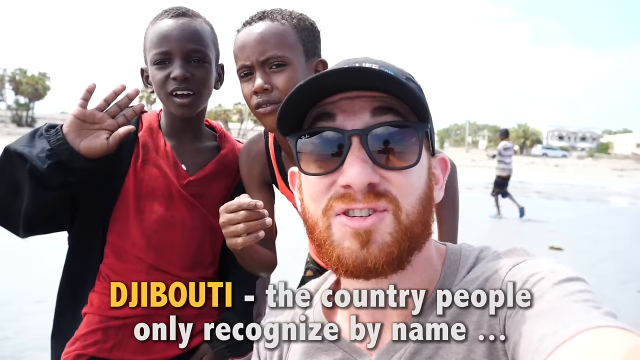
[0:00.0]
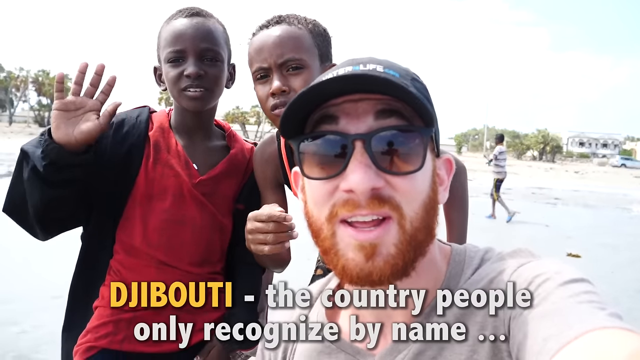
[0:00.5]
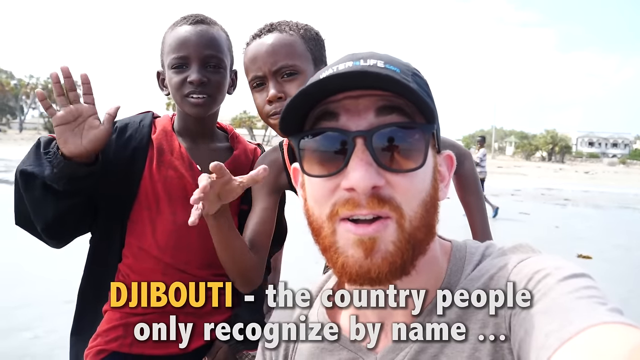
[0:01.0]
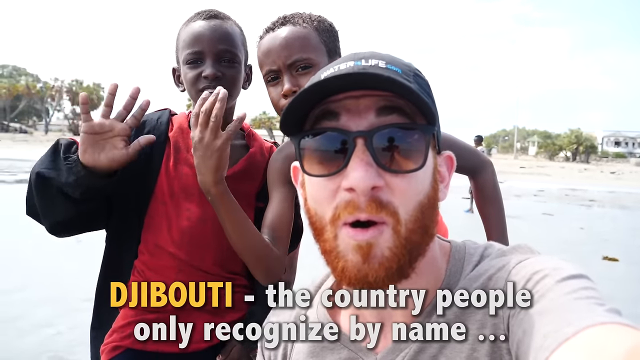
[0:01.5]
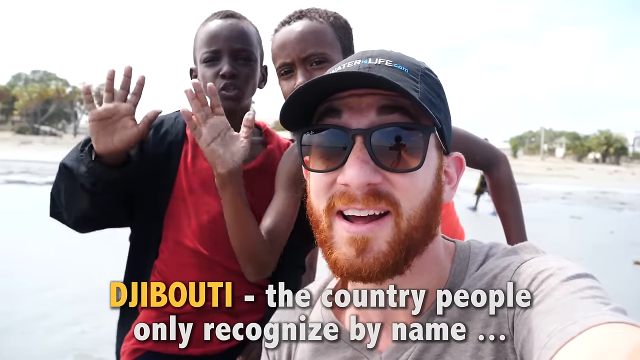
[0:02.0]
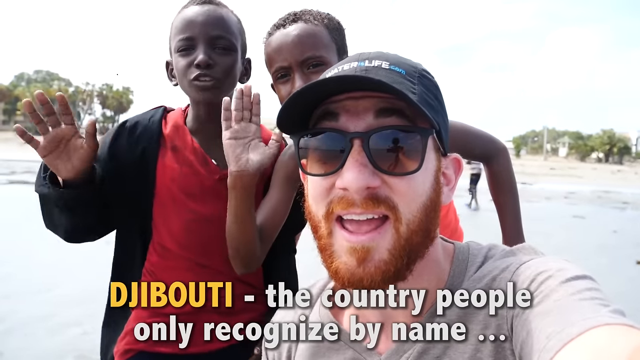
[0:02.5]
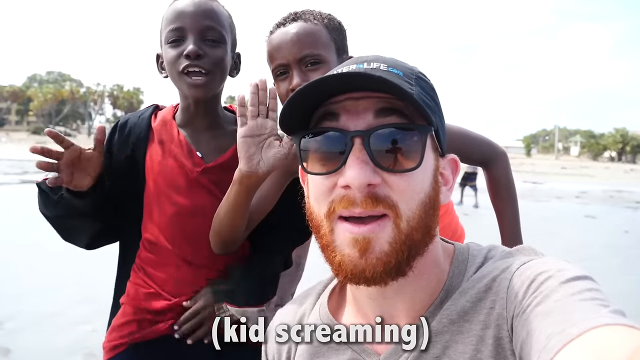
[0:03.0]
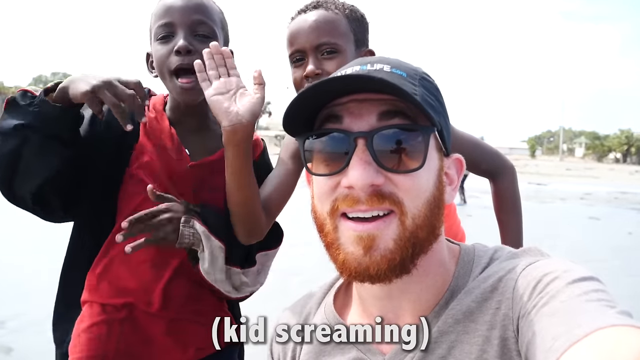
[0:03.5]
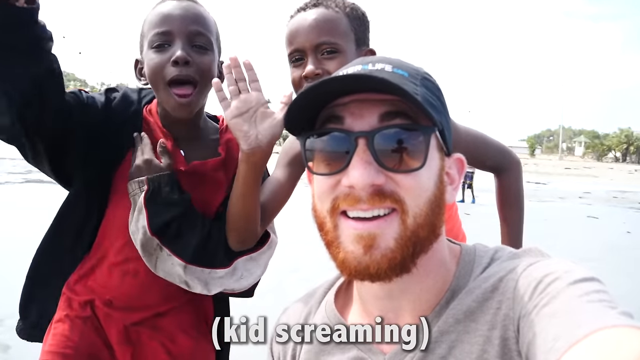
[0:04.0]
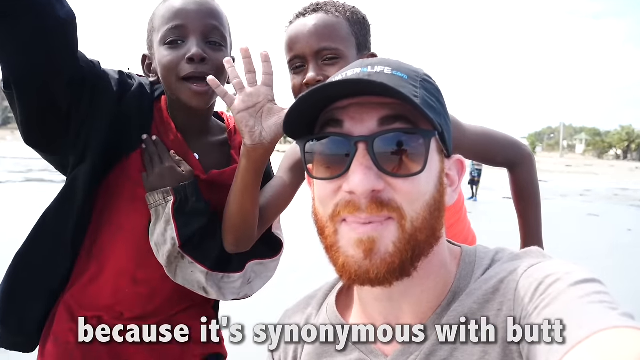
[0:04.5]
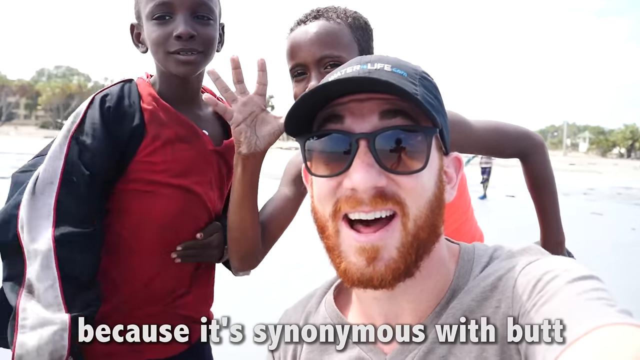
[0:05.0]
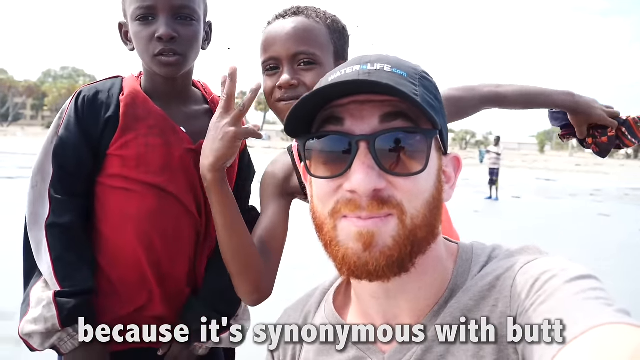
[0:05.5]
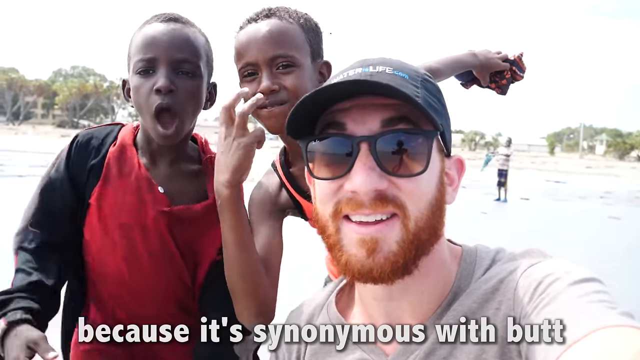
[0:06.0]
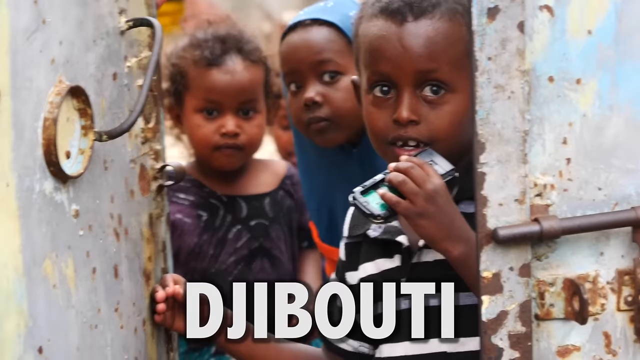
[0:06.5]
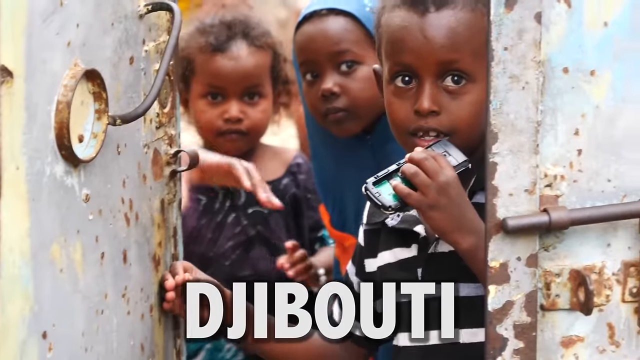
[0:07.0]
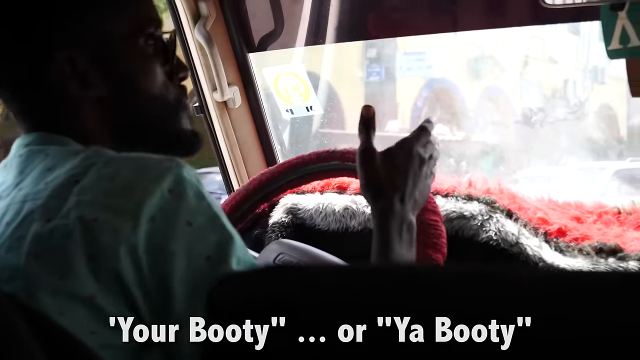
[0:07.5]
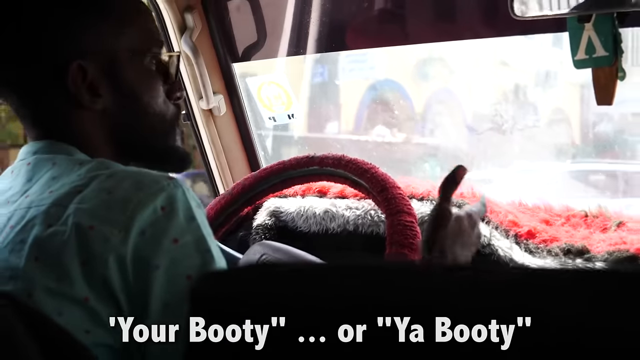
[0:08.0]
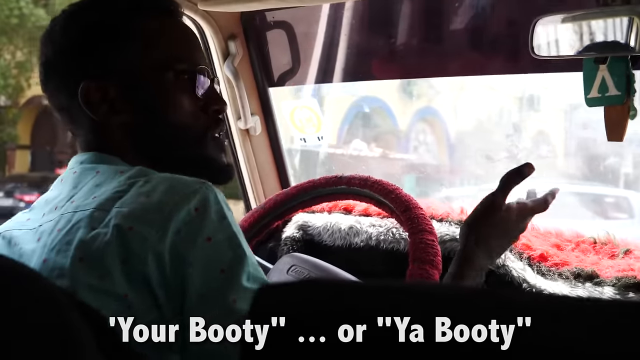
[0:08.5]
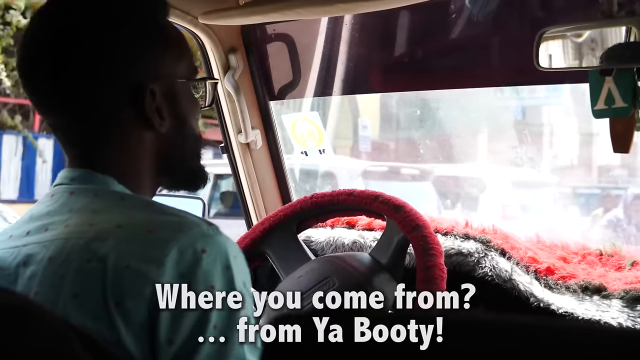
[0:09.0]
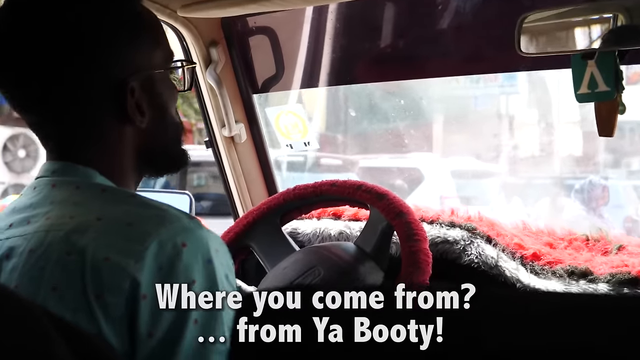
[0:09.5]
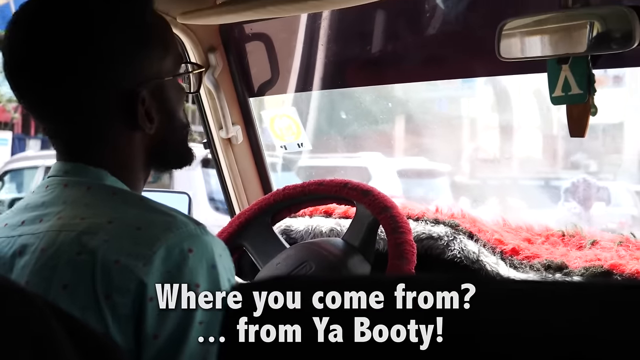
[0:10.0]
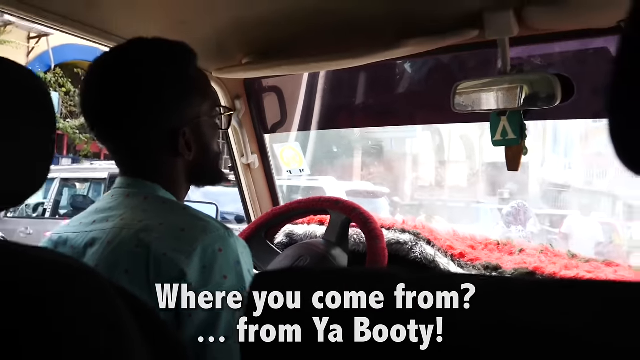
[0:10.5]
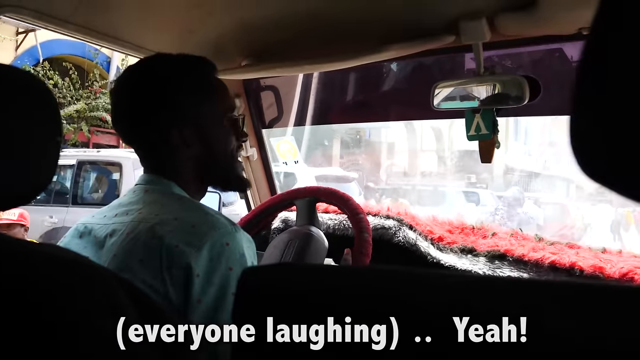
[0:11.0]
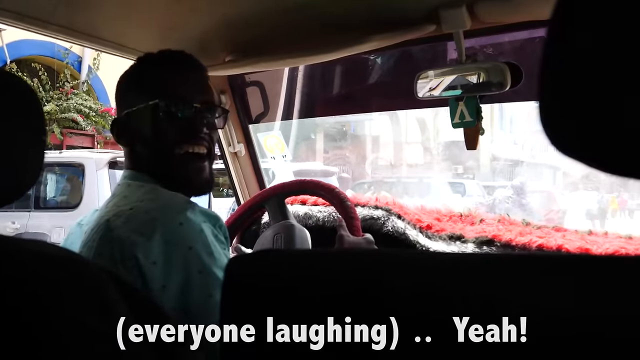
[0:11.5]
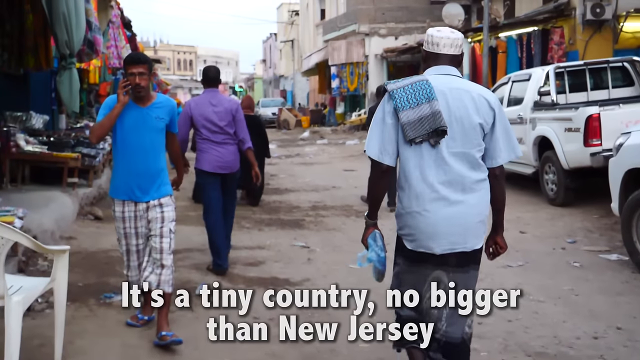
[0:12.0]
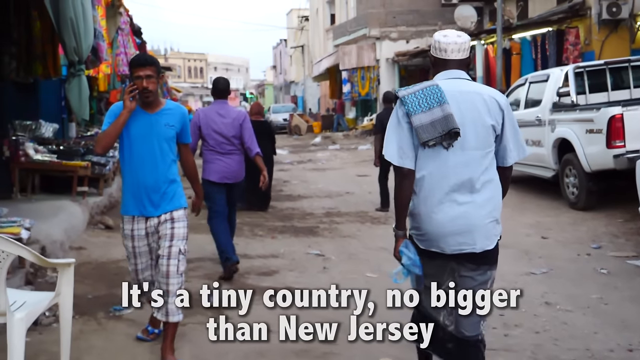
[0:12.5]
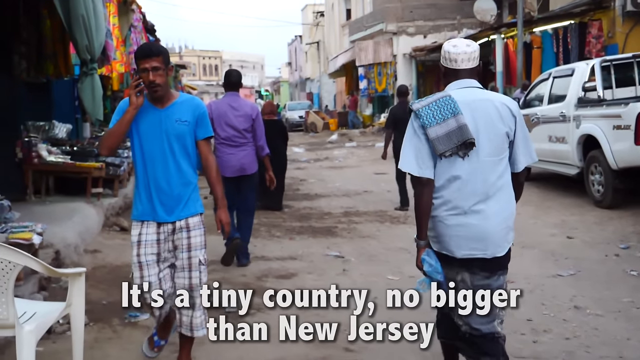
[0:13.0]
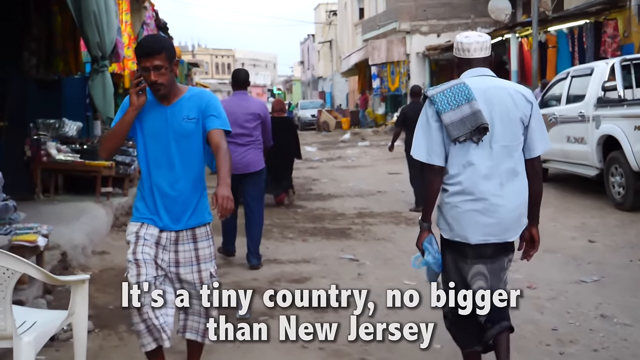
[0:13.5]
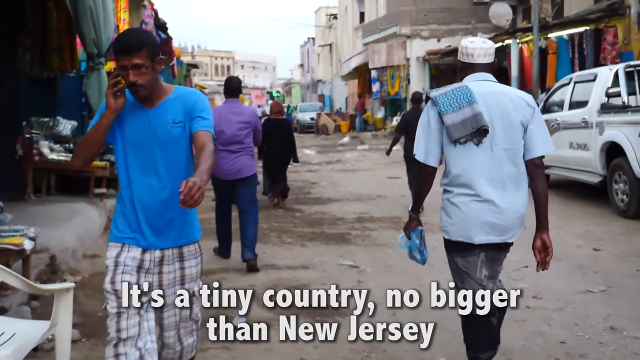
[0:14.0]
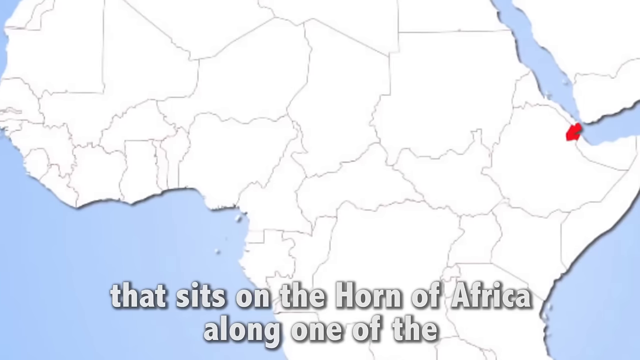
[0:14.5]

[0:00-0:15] The video follows a man's trip to Africa. A red-haired man wears a hat, sunglasses and a gray t-shirt, and has a thick beard and mustache. Behind him are two young African-American boys. The name of the country then appears on screen, spelled beginning with "Dj". Subtitles read "your booty, where you come from is your booty," and everyone laughs as he sits in the back of a cab. The kids all wave at the camera. He is in a car that has a fuzzy red steering wheel and a red carpet-like covering across the top of the dashboard. The driver explains something and talks to him while looking backwards; he is wearing glasses.